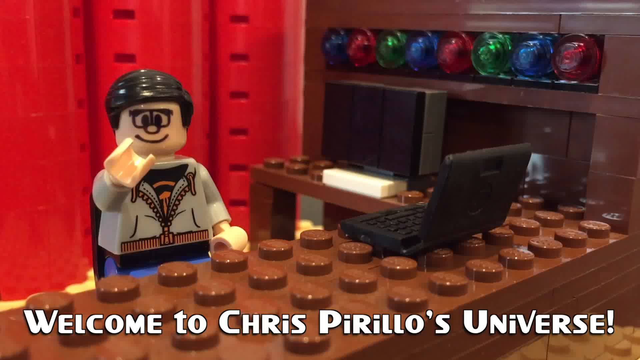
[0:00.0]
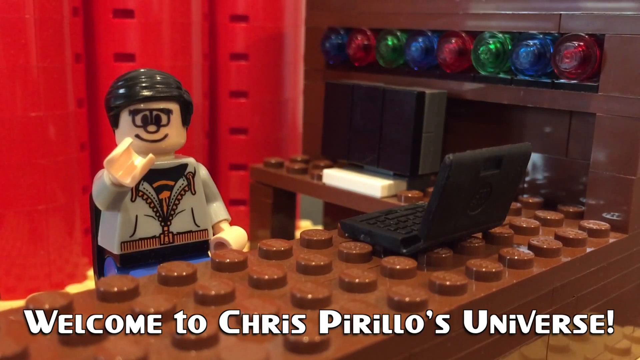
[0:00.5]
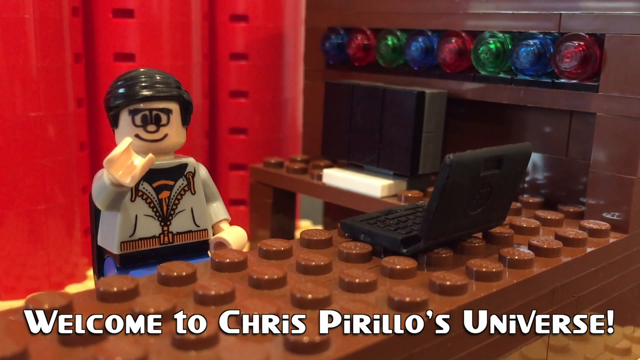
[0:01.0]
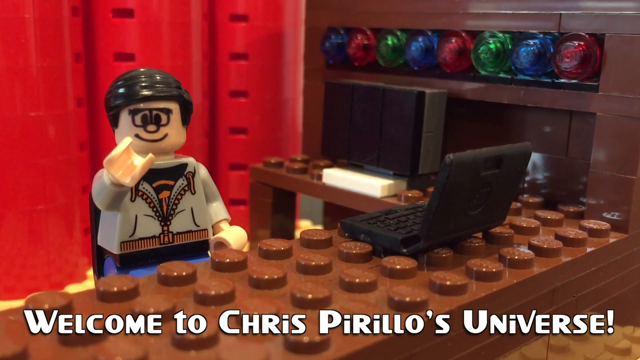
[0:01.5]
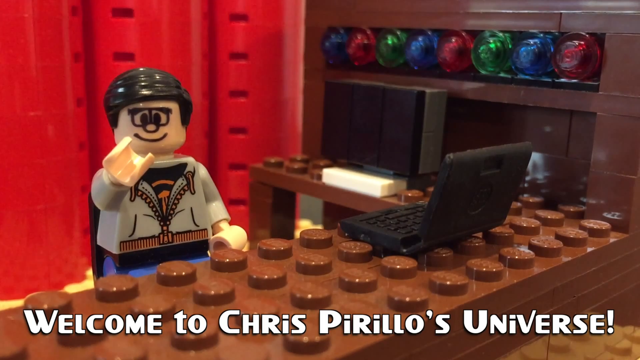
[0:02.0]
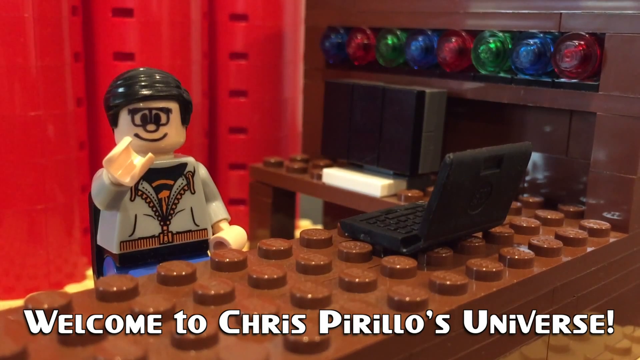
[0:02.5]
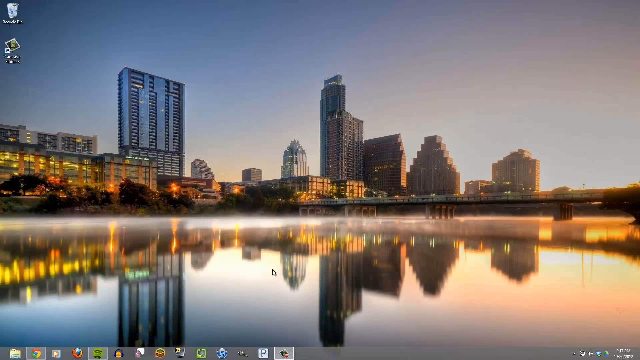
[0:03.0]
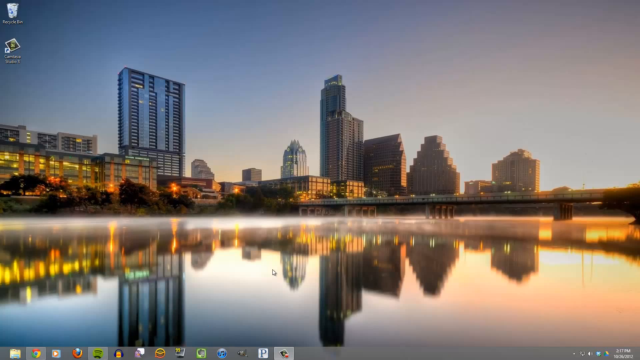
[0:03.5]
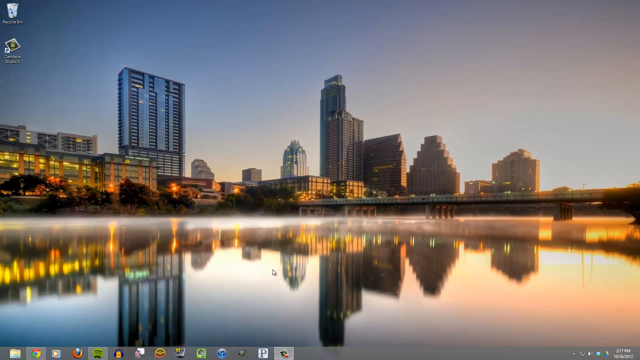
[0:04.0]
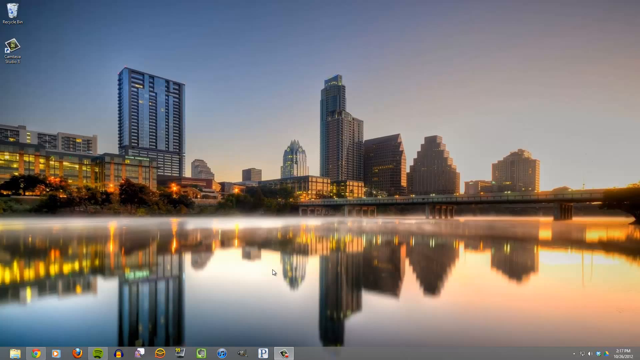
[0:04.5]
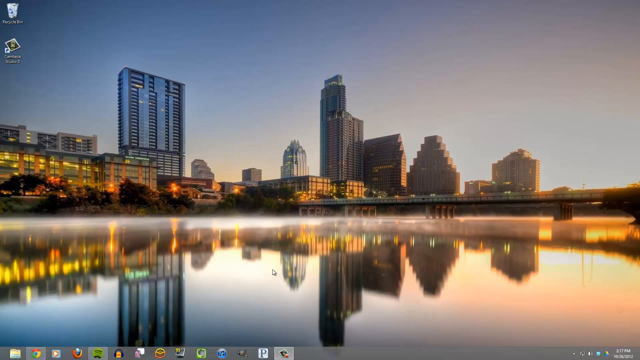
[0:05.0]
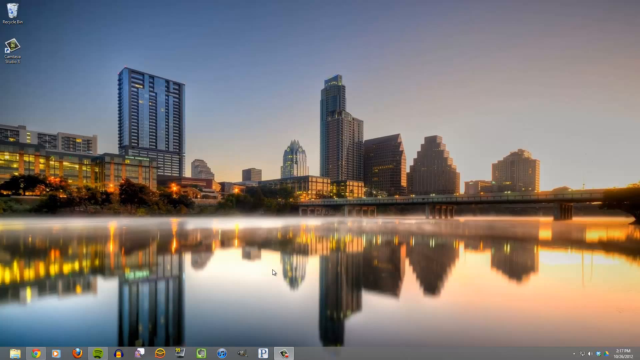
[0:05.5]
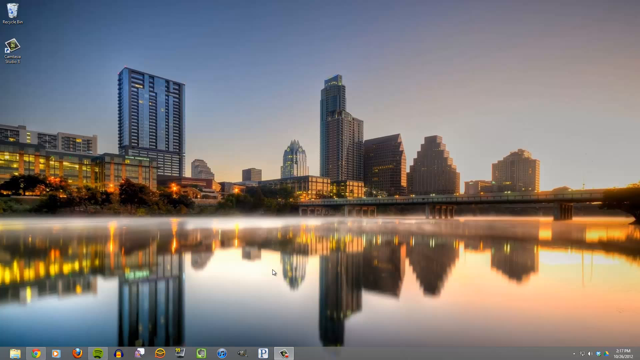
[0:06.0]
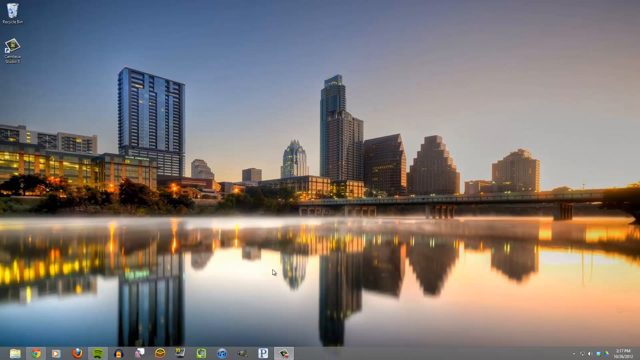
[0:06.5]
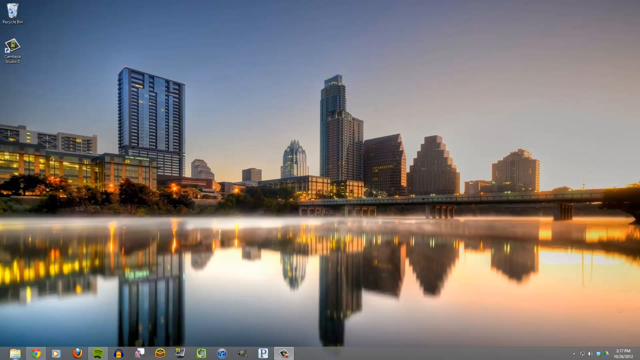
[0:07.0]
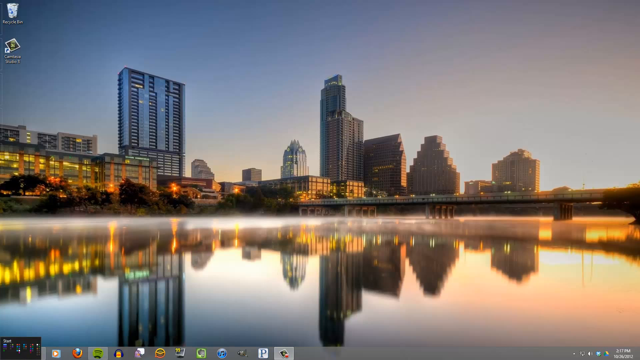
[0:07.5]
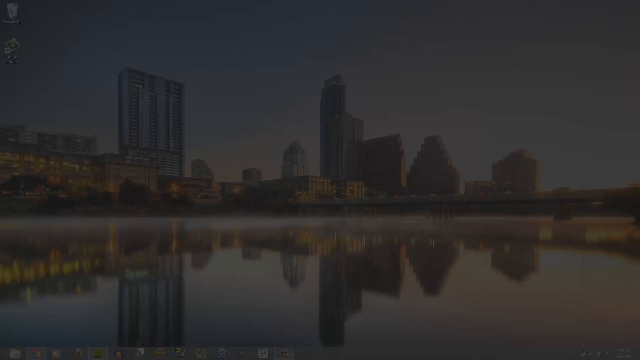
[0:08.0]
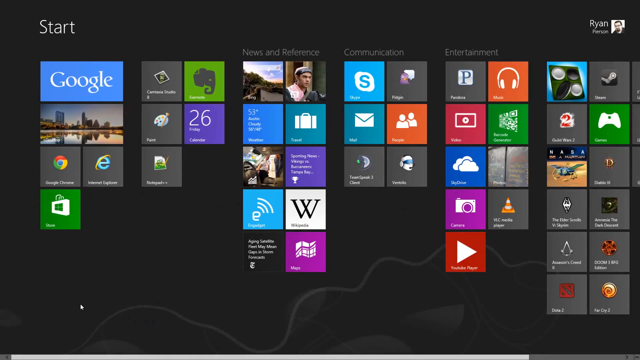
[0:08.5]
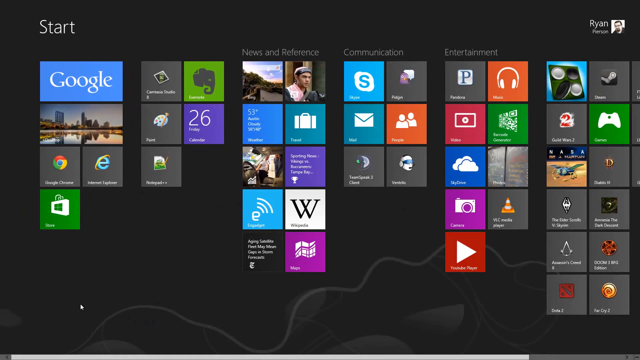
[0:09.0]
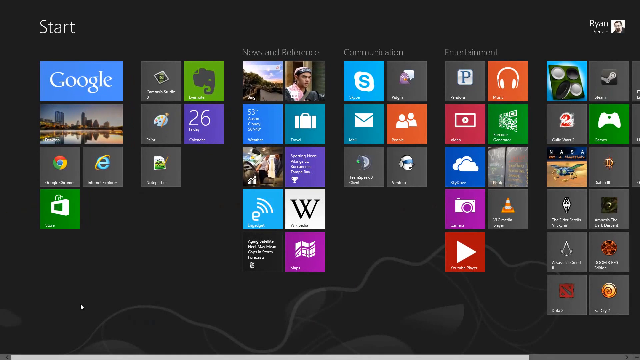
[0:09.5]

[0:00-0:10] A Lego character wearing a black hat and a grey hoodie appears first, surrounded by some brown Lego and some red Lego, along with various other small amounts of Lego in green, blue and red. The video then transitions to a picture of some skyscrapers and a lake, and then to a screen of icons in various different colors. It appears to be Windows 7 or similar, with icons such as Chrome, Internet Explorer, Evernote, Windows Store, Skype, Xbox and many more. The icons are on a black background, and the profile name "Ryan" is shown in the top right corner.